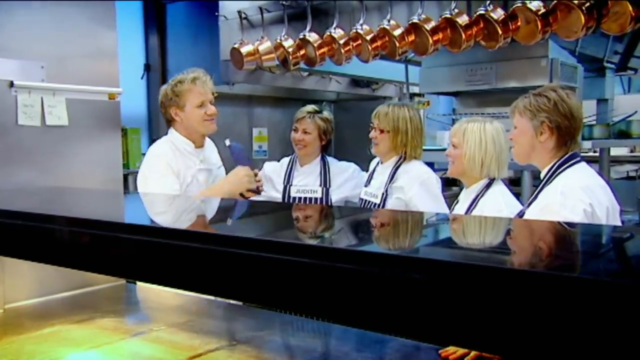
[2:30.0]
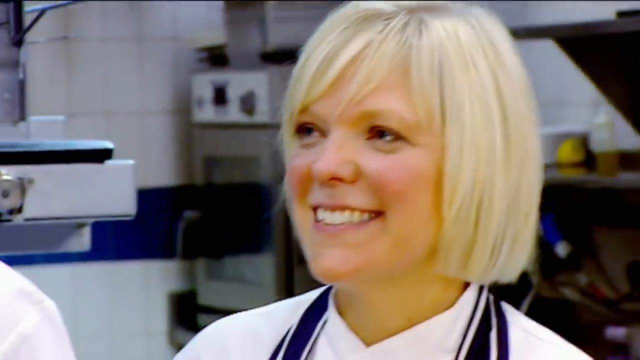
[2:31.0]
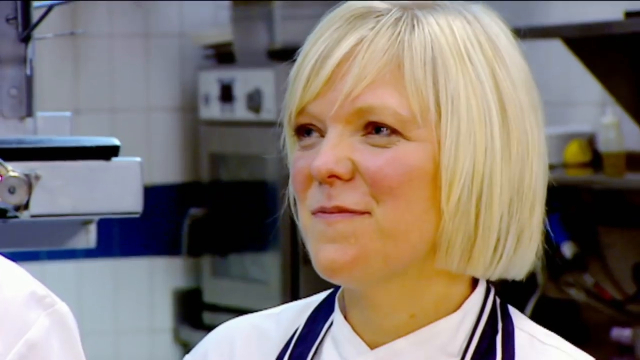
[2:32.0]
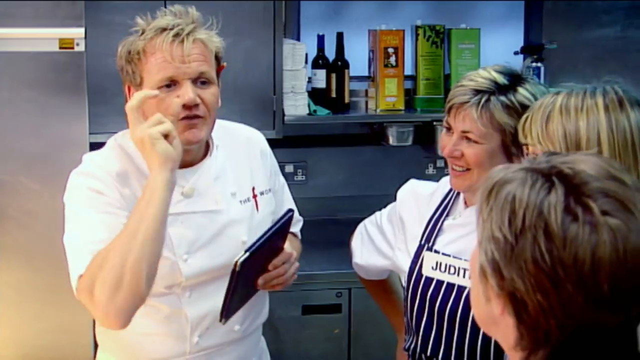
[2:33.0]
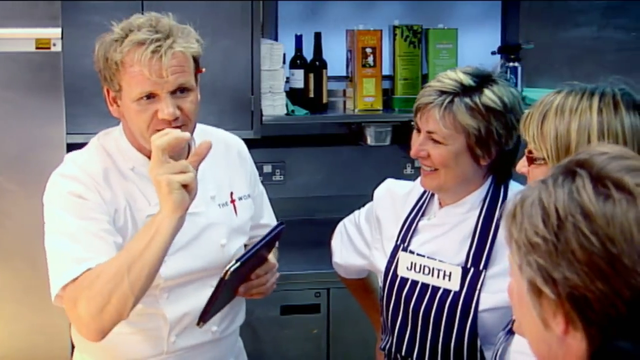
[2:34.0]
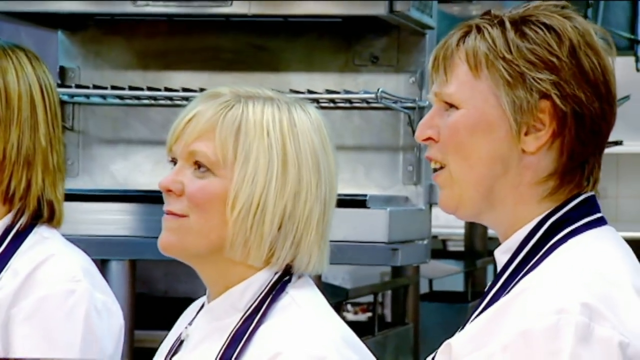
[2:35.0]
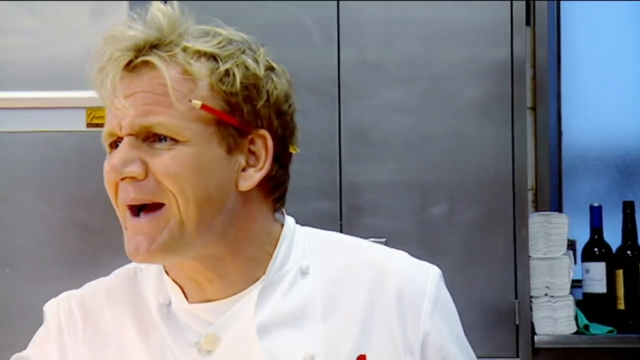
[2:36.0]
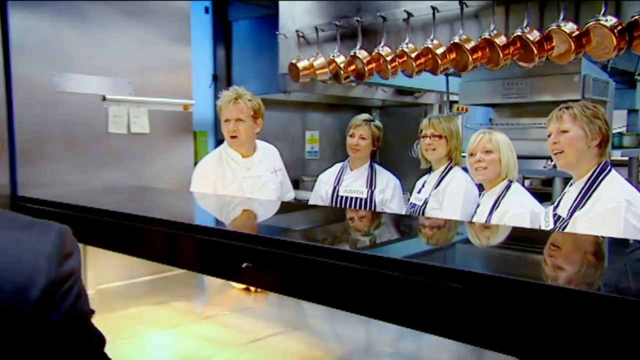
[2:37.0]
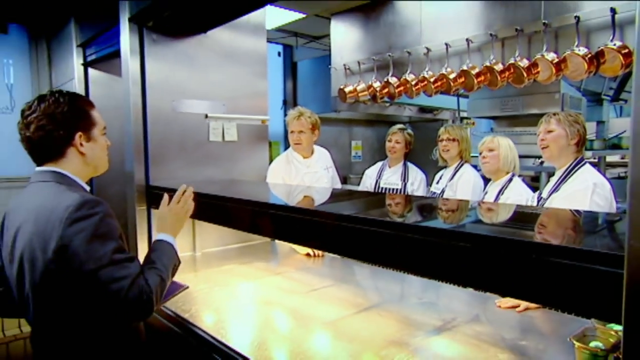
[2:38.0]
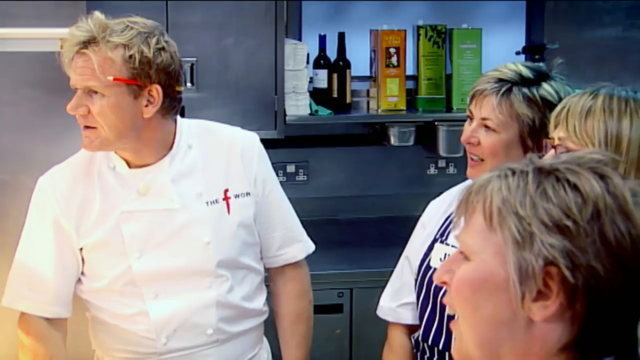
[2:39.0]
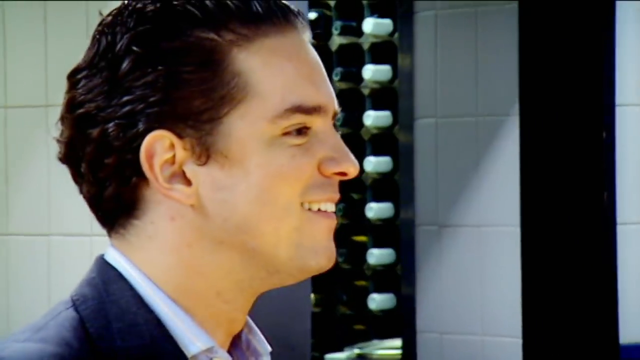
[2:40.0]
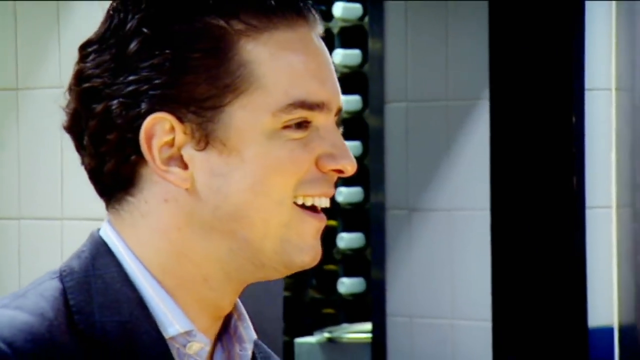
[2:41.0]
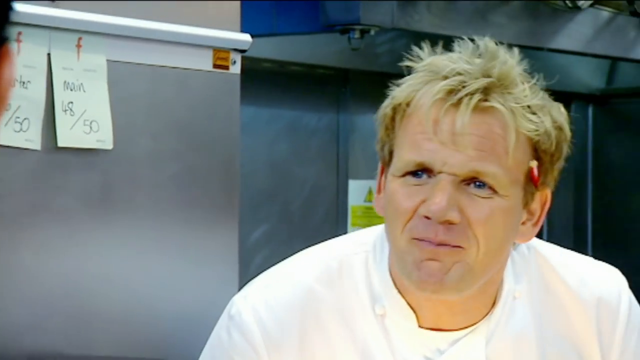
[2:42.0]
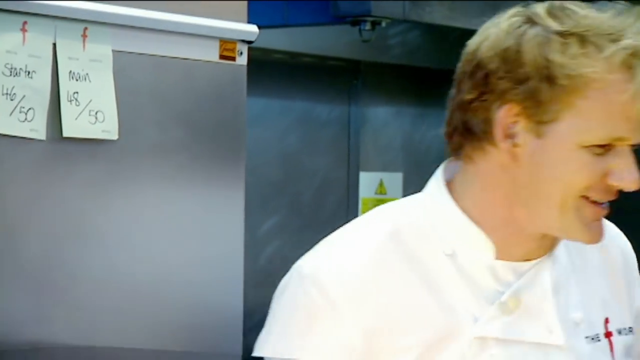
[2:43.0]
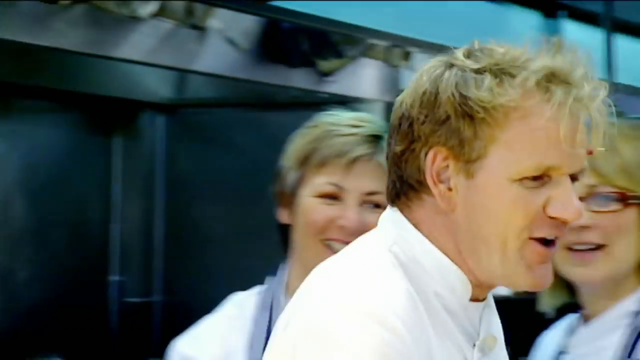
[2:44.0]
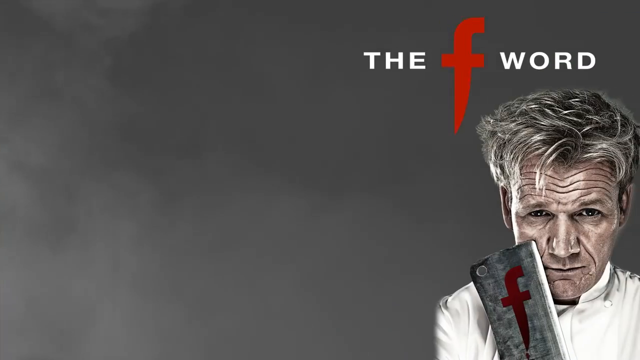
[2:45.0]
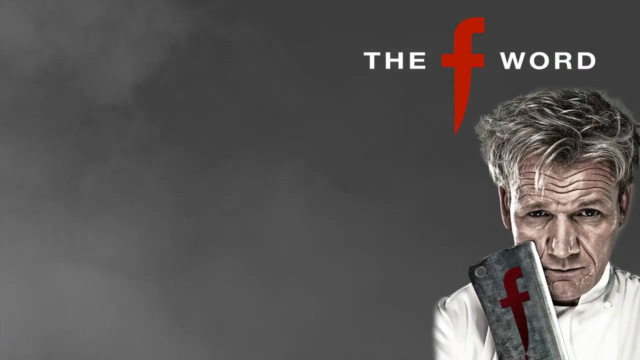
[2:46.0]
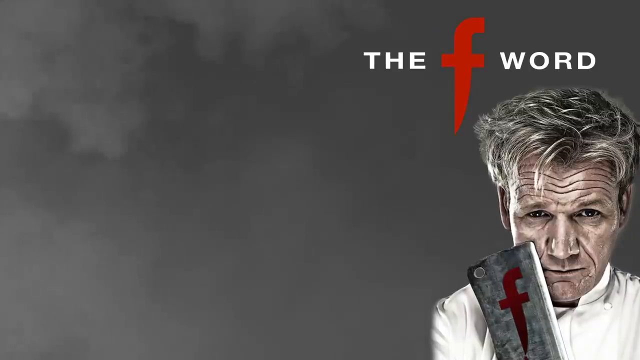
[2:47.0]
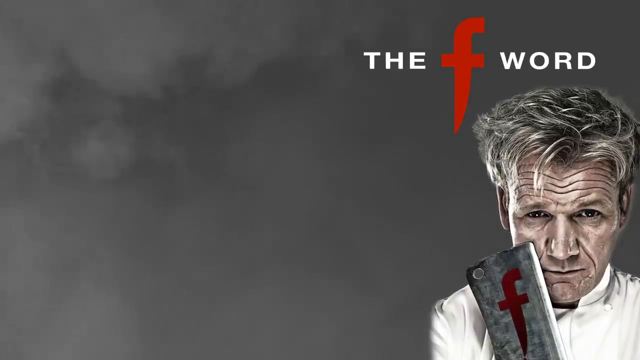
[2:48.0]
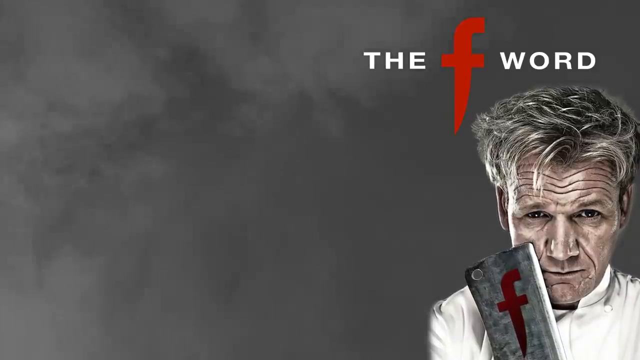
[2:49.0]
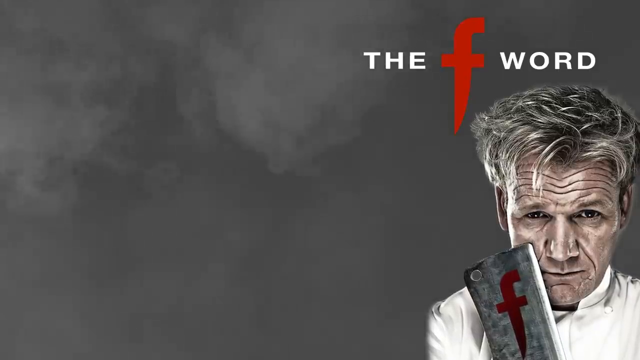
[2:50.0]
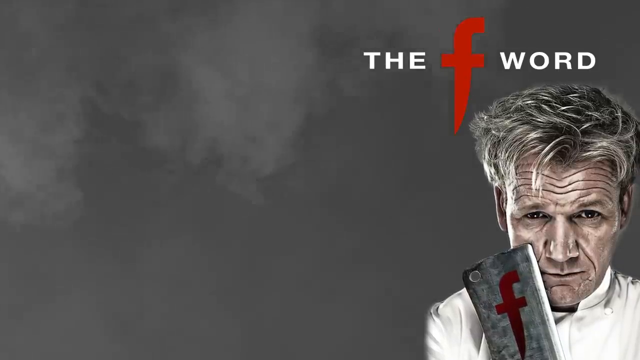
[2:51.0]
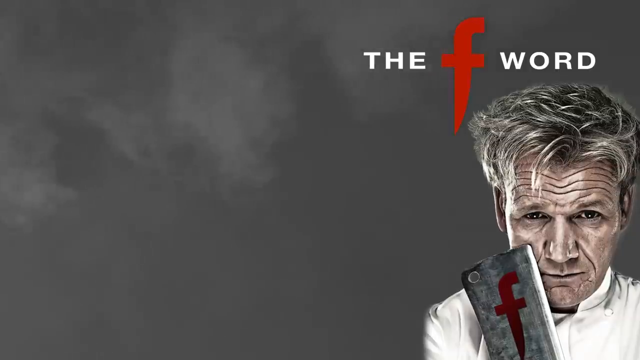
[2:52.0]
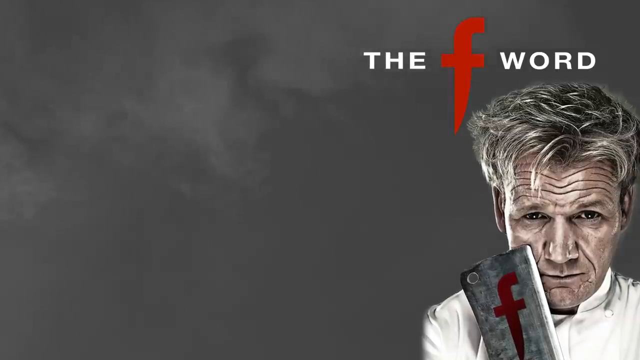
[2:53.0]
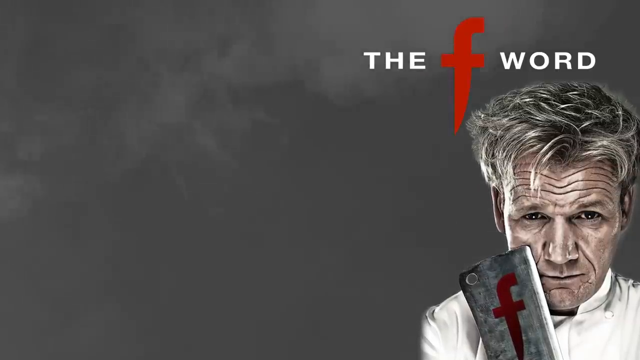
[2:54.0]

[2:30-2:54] The head chef talks to four women who are also chefs, all dressed in white and wearing blue aprons. He explains something to them, gesturing instructions, while holding a menu. He wears a plain white uniform, and they all listen as he puts a pencil around his ear. He looks like a funny man, as they all cheer and laugh while he speaks. They all turn to a man on the other side of the counter who starts talking, and they laugh again at him as he apparently responds to the chef. The chef looks at him as he walks away. Finally, text reading "the F word" appears with an image of the chef below the words.